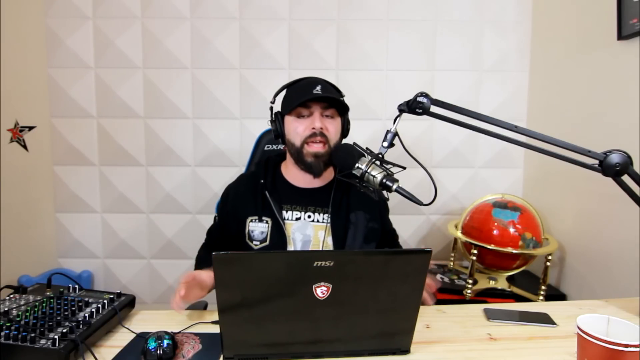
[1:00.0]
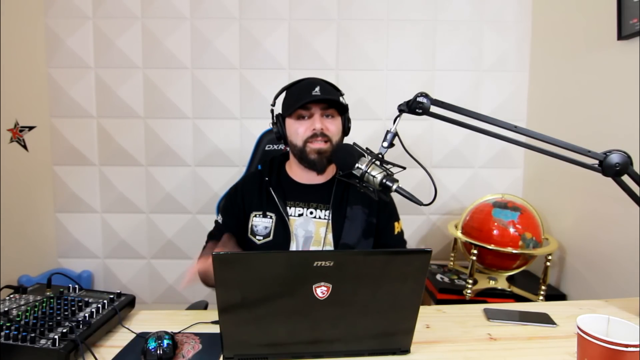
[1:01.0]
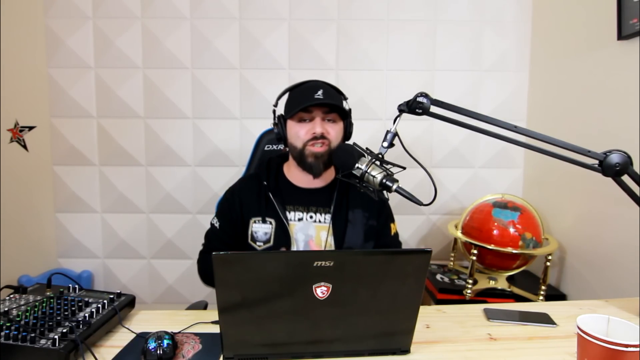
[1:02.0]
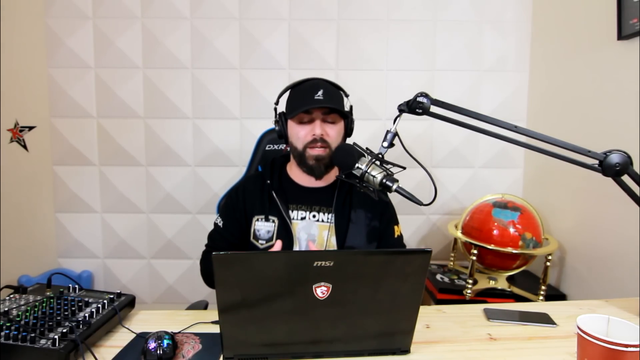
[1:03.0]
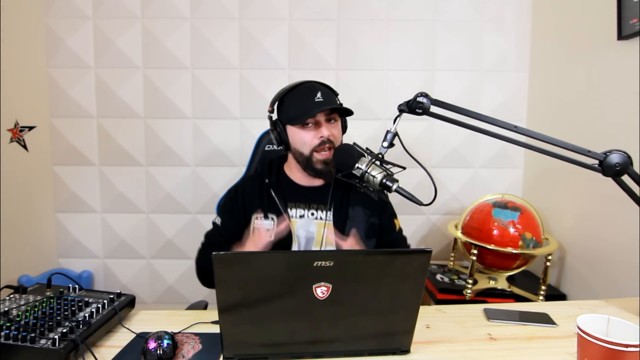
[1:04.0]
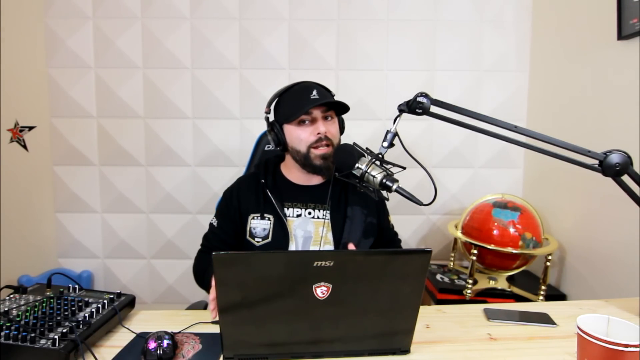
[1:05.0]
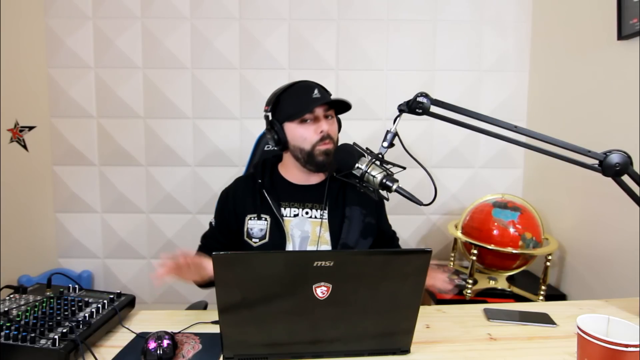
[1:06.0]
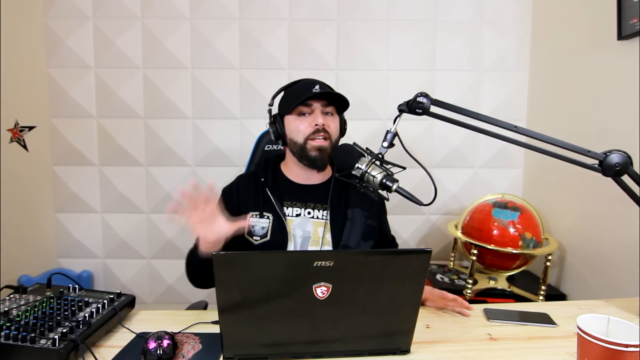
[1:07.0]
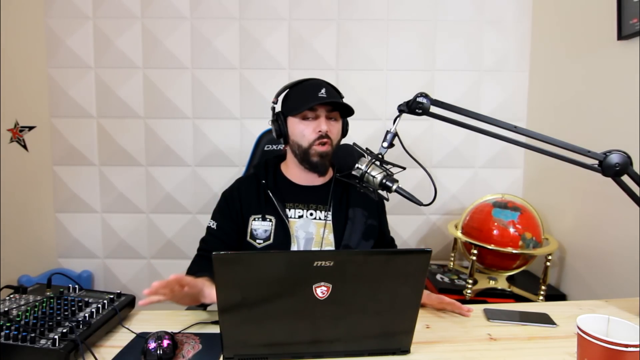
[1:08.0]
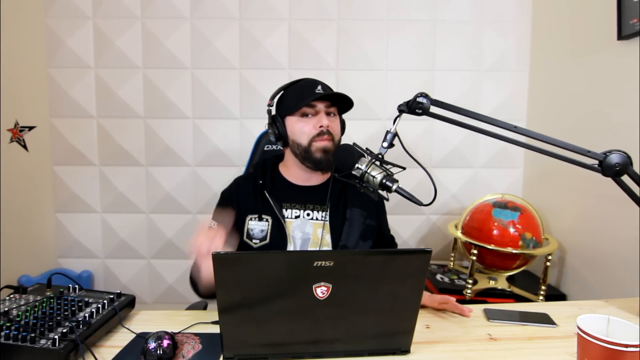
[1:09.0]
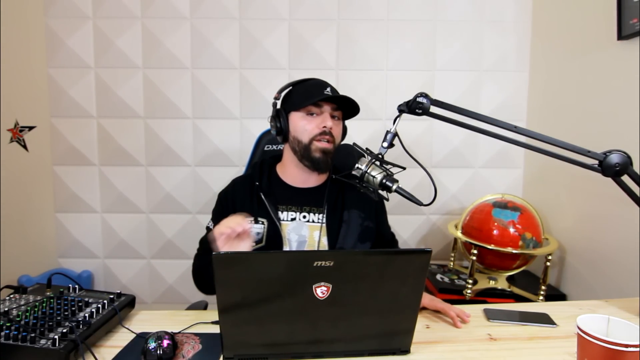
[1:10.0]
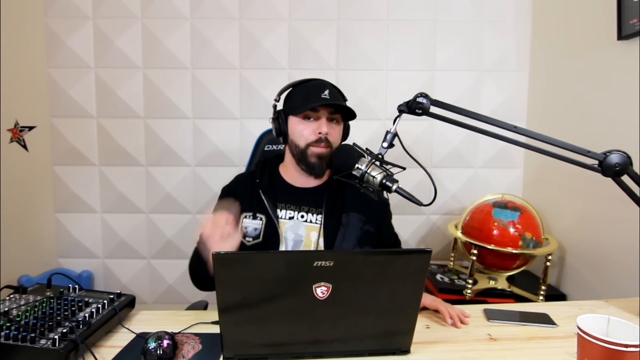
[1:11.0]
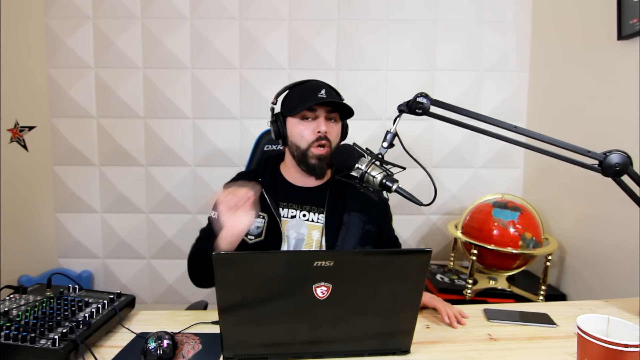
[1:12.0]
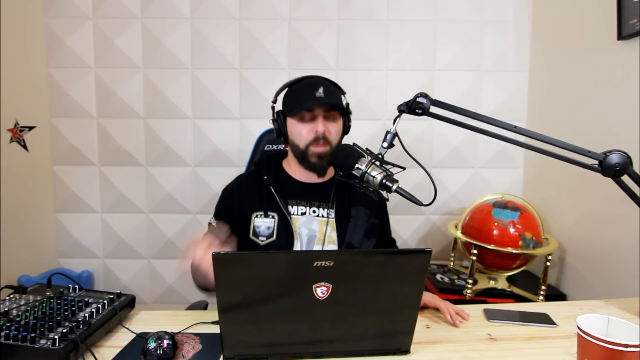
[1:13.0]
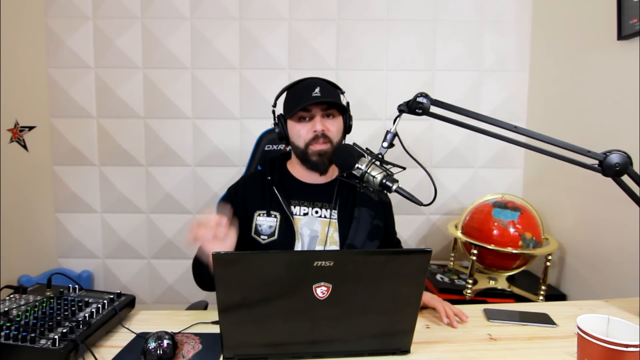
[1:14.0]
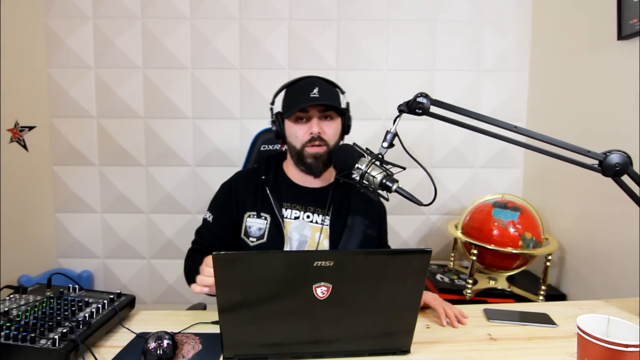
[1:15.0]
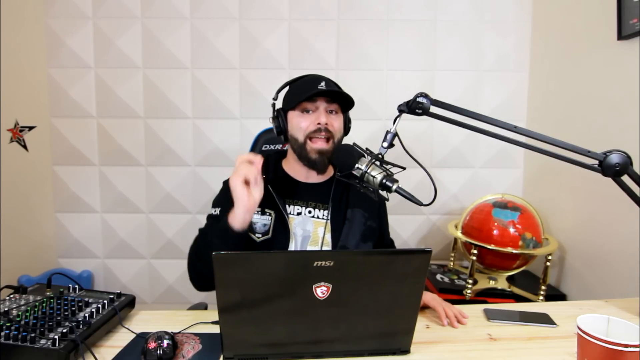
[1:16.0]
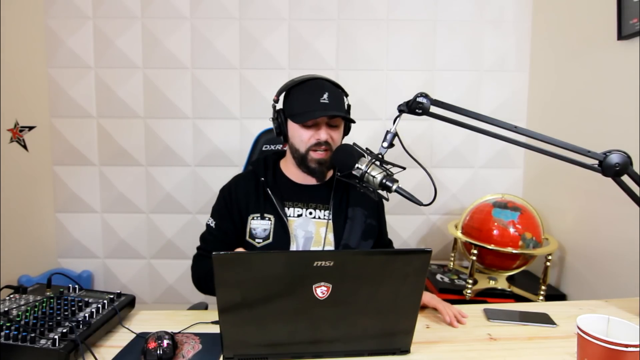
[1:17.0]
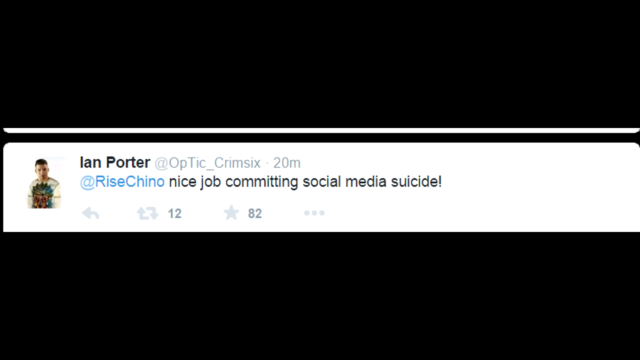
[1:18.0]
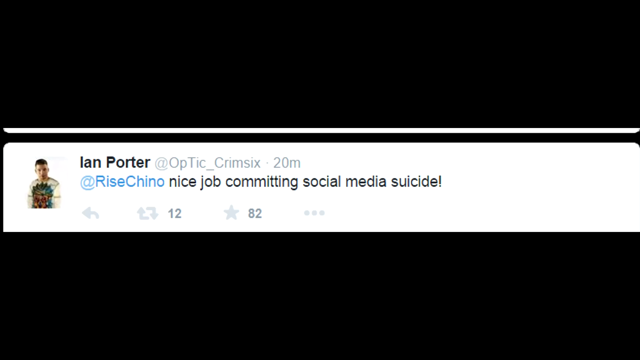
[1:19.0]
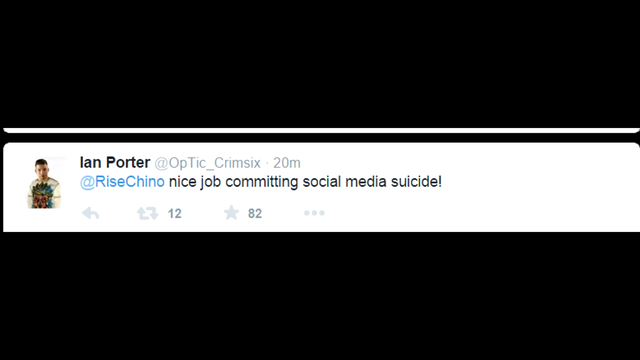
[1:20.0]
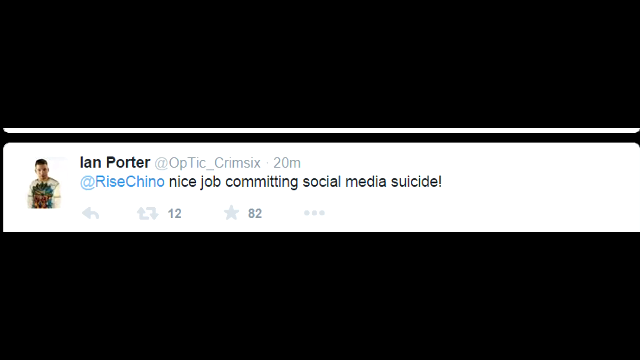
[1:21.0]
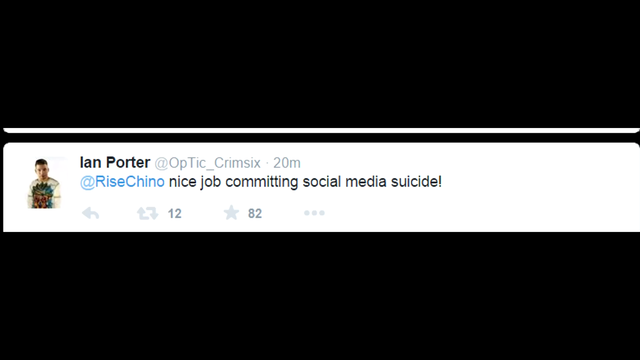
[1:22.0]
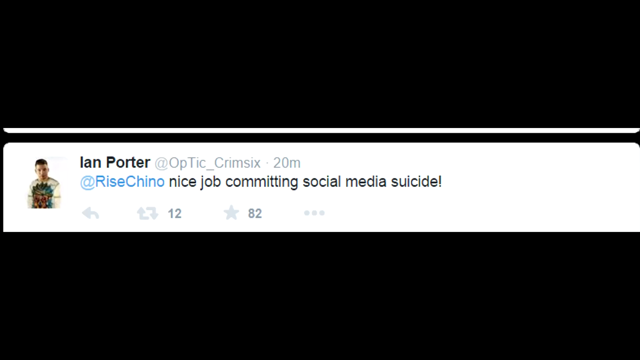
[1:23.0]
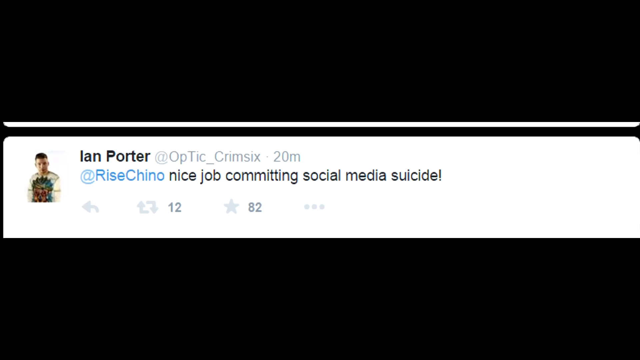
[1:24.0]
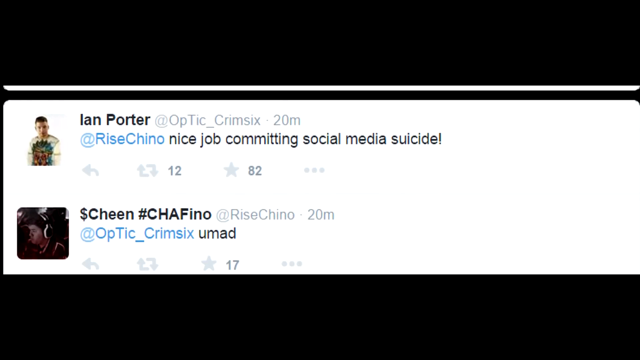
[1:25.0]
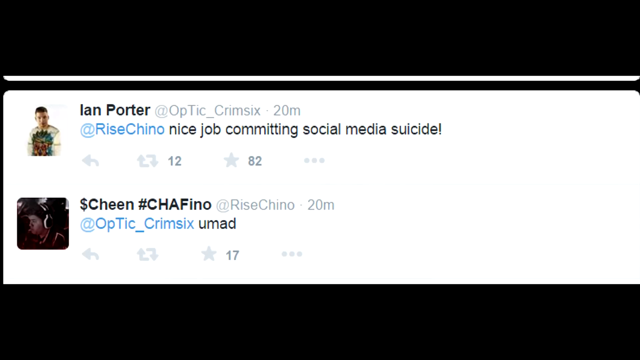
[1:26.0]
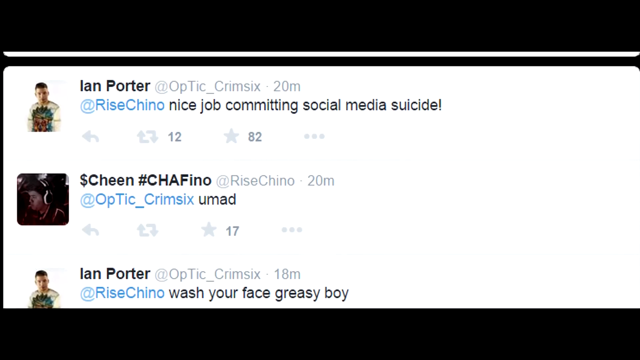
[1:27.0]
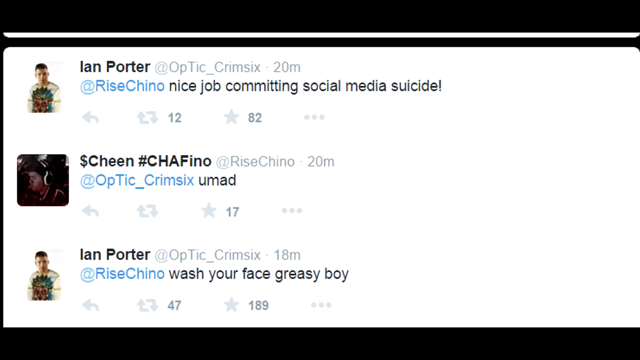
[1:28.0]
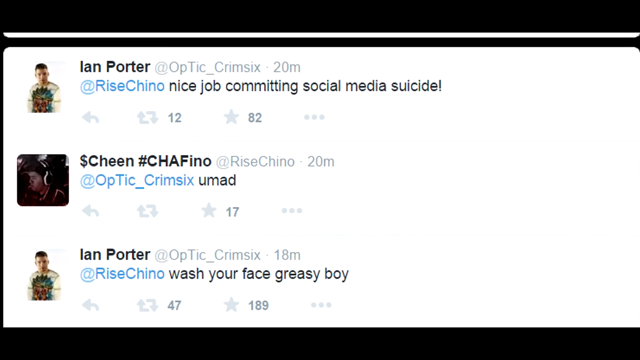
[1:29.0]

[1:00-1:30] The man talking into the microphone sits behind the desk, using his right hand to make his points as he talks energetically. He is wearing headphones. A small blue chair is in the bottom left corner, and behind the man there is a white checkered backdrop. Comments from different YouTube users then appear: one from a user called Ian Porter reads "nice job committing social media suicide", one from a user called Cheen reads "you mad", and another from Ian Porter reads "wash your face greasy boy". The comments also show when they were posted and different reactions from viewers.